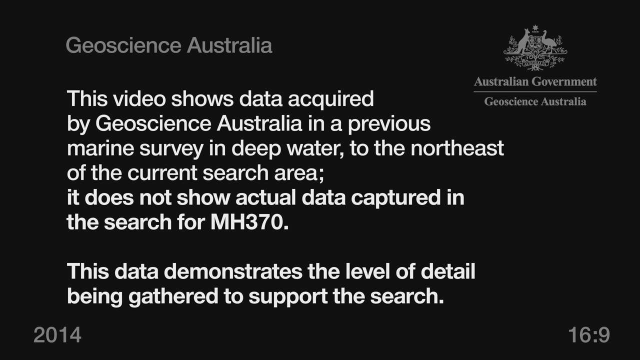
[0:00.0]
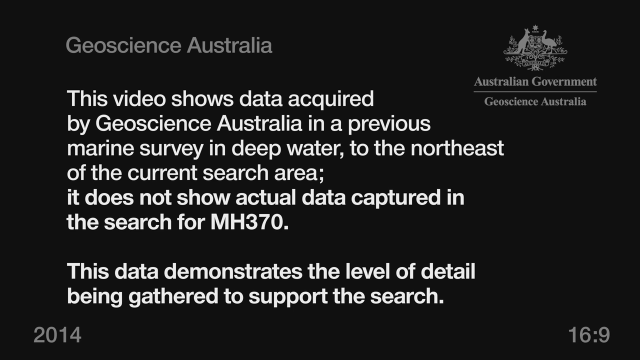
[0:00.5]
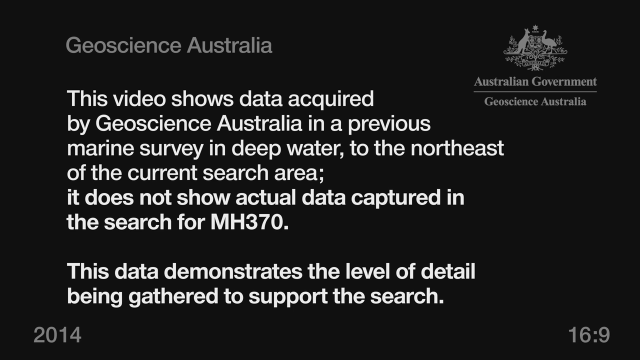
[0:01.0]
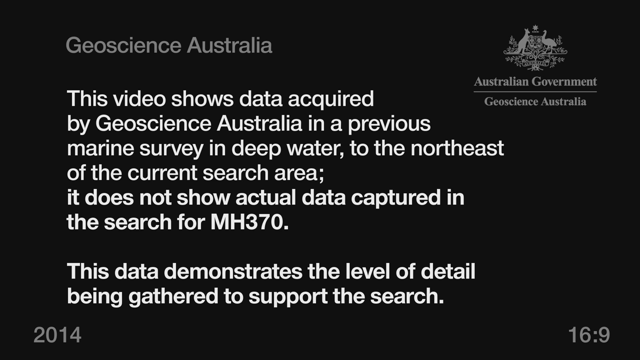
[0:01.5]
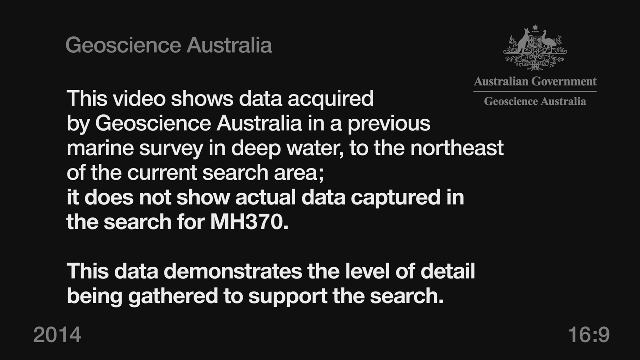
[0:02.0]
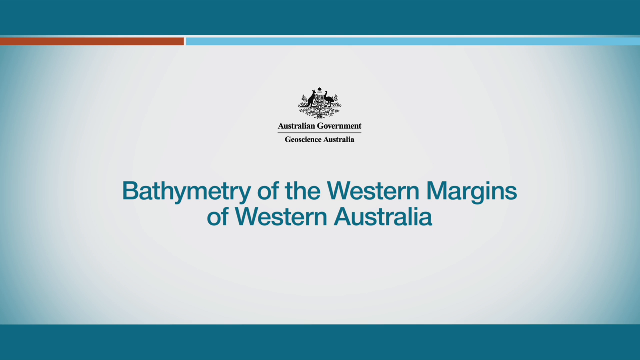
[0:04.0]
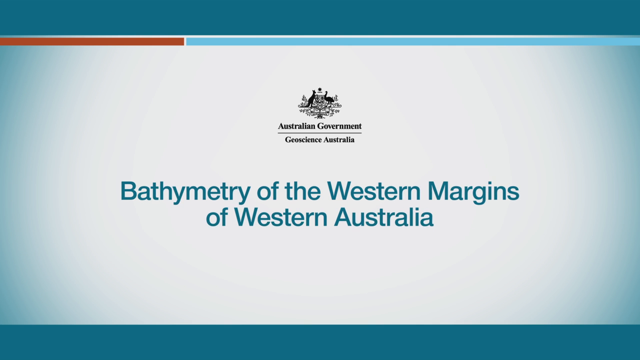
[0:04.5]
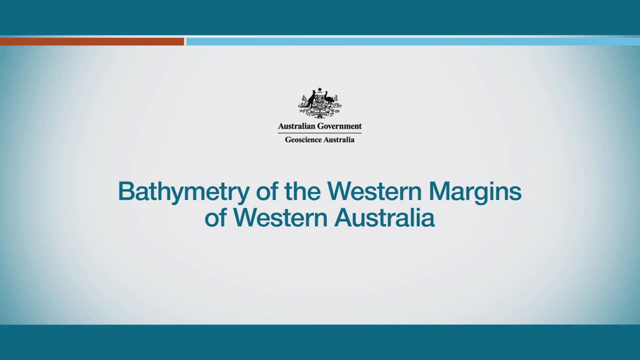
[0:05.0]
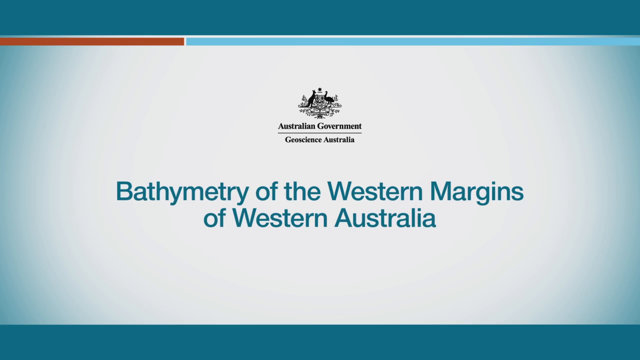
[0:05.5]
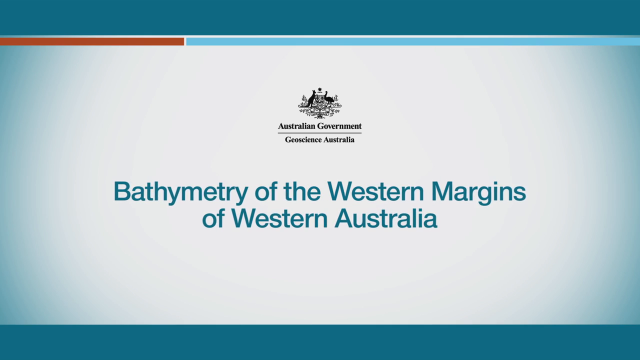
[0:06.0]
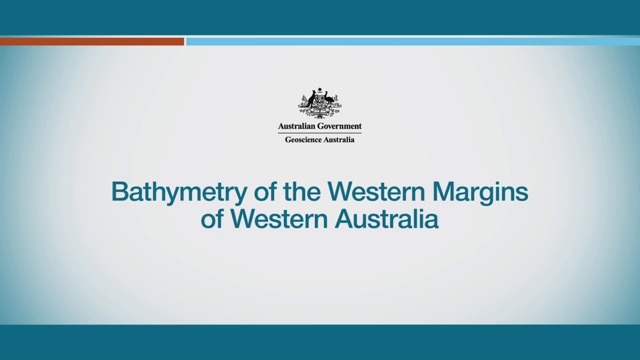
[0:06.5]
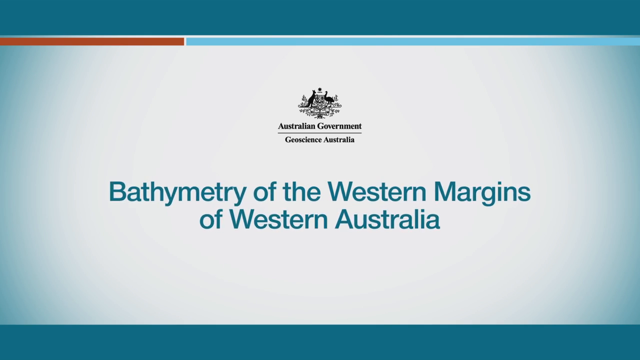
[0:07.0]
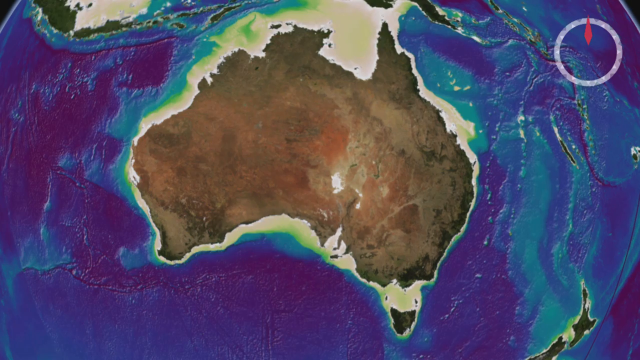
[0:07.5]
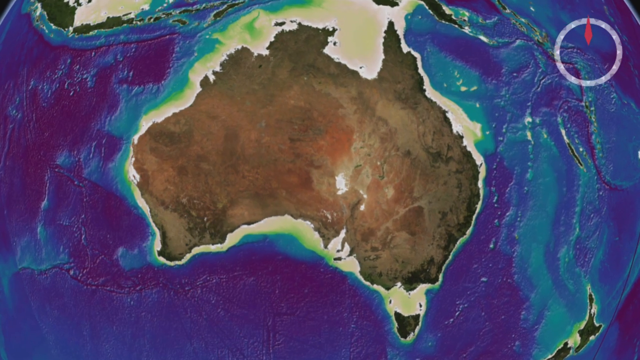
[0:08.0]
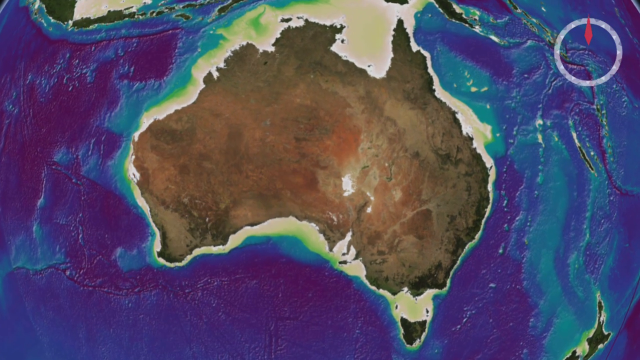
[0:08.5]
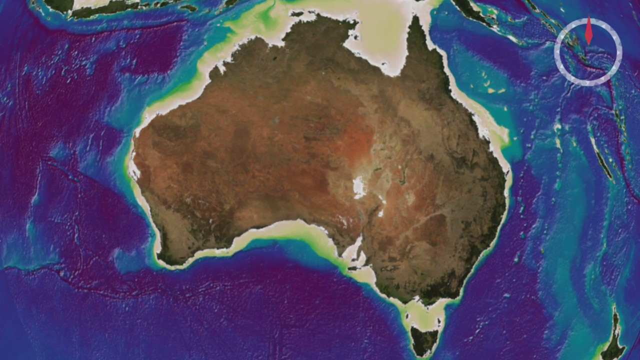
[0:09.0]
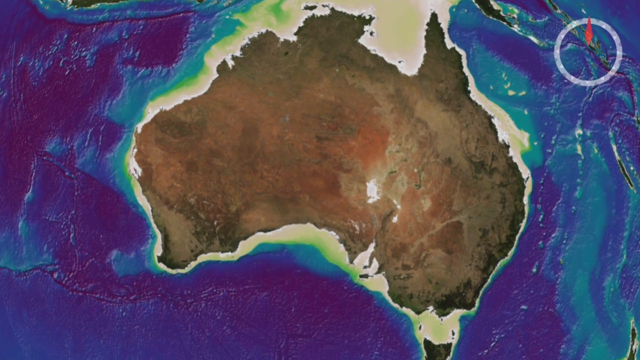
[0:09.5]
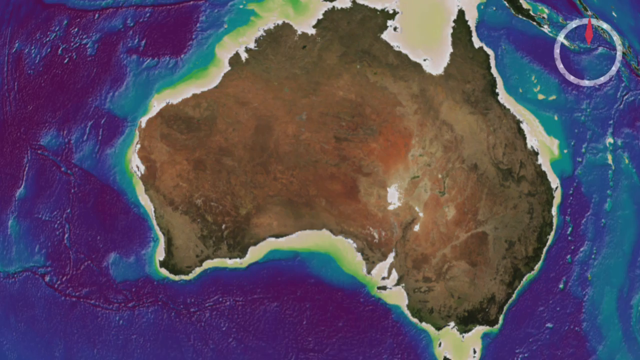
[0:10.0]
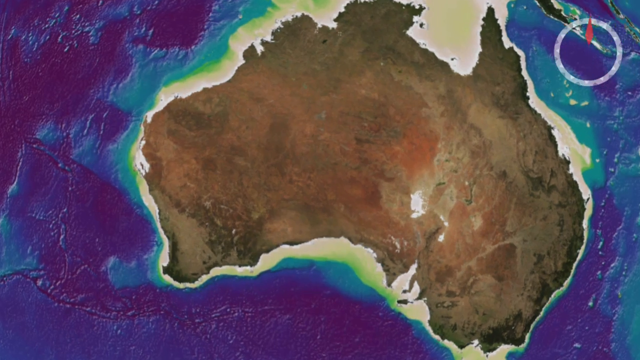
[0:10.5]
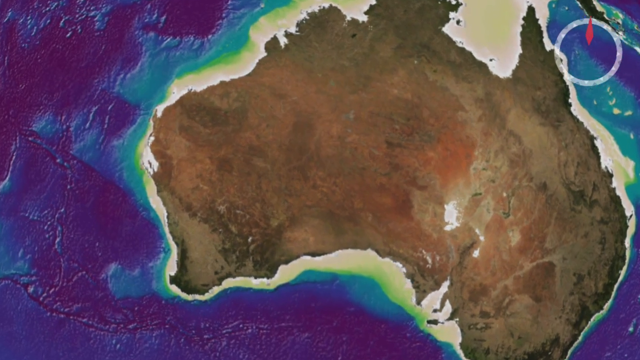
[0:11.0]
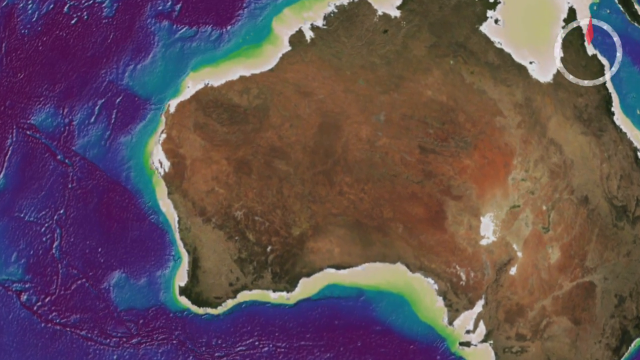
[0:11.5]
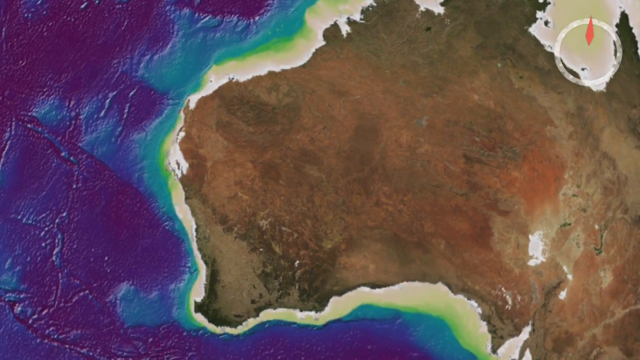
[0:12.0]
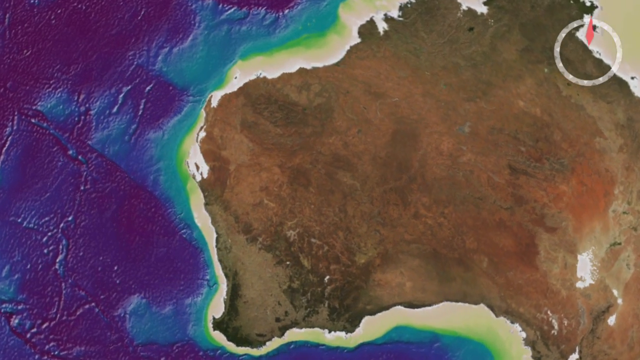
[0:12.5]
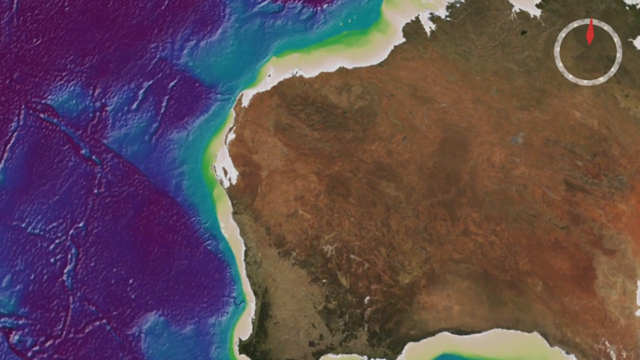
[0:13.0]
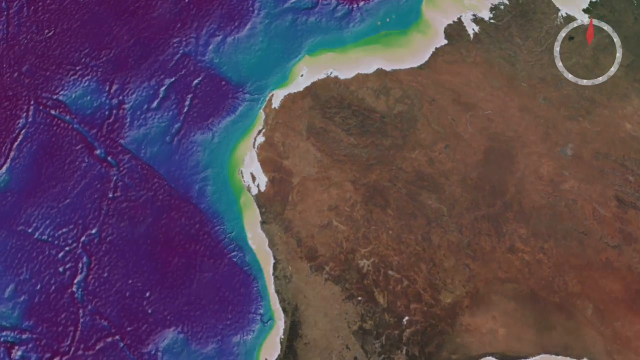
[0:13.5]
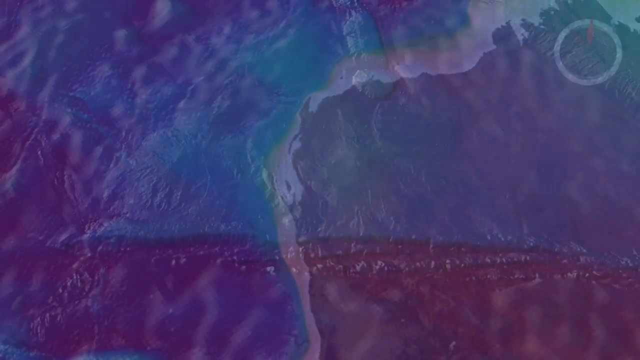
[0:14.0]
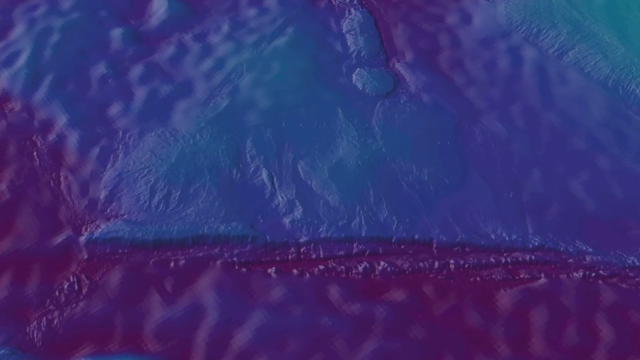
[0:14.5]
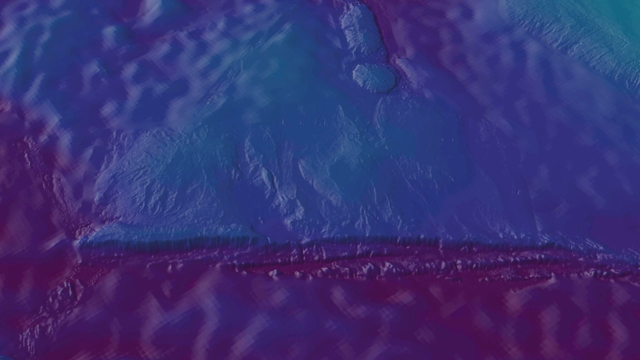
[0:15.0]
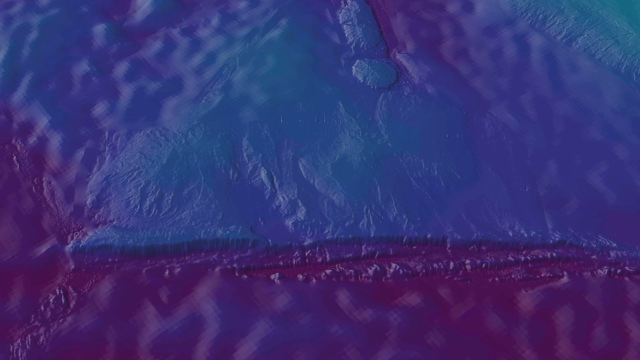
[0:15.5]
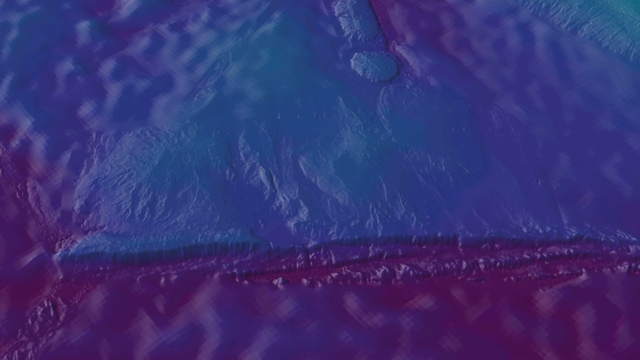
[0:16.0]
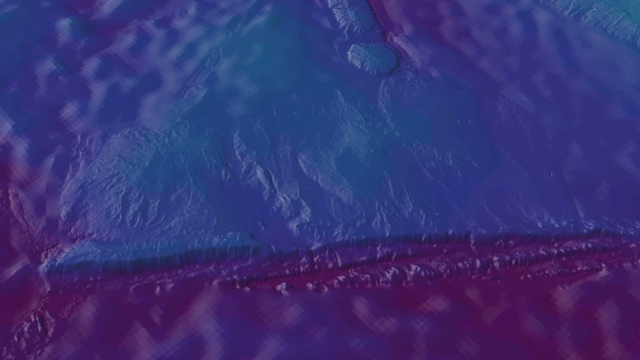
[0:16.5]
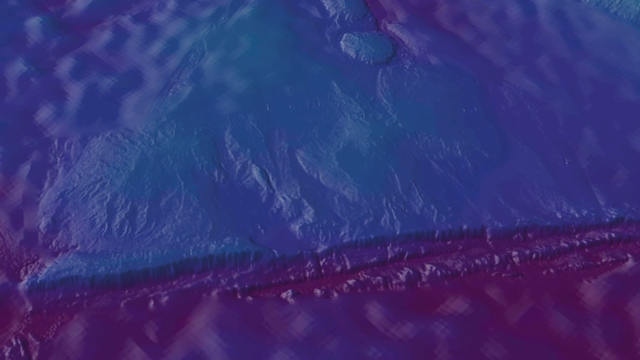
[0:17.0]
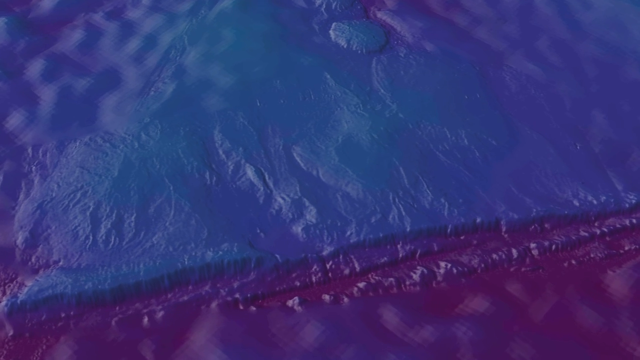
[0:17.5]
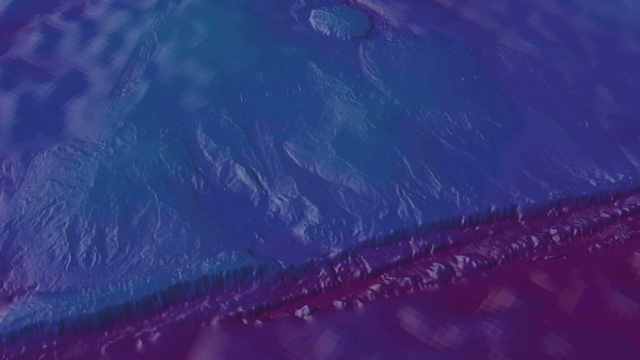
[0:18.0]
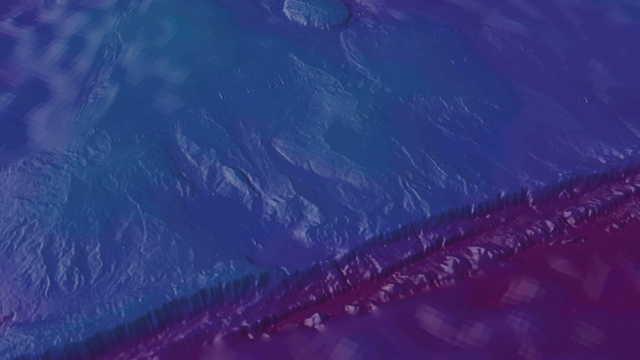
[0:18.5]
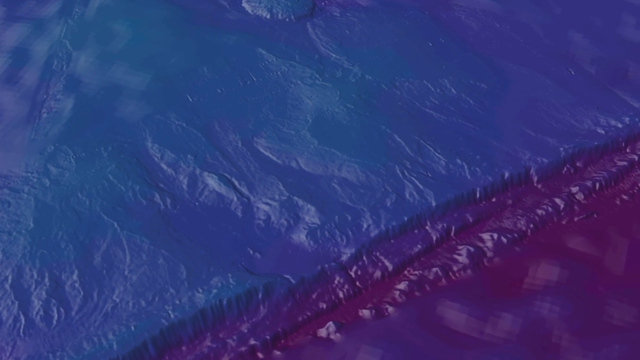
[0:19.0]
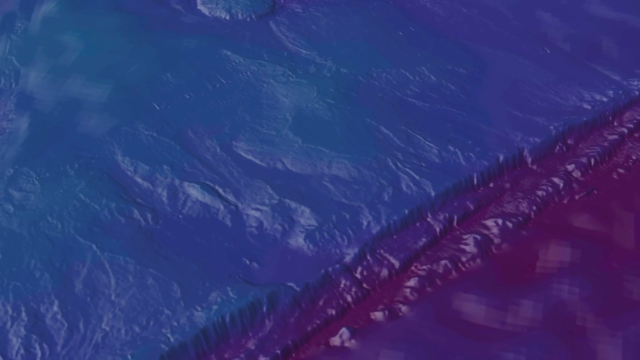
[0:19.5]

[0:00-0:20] On-screen text reads "Geoscience Australia," followed by the text "This video shows data acquired by Geoscience Australia in a previous marine survey in deep water to the northeast of the current search area. It does not show actual data captured in the search for MH370. This data demonstrates the level of detail being gathered to support the search." The year 2014 appears on screen, along with text mentioning the western margins of Western Australia. Australia is shown as if on a map, and then a lot of blue and purple fills the screen. Text reads "Australian government, Geoscience Australia." Most of the words are white on a black background, so they stand out vividly.